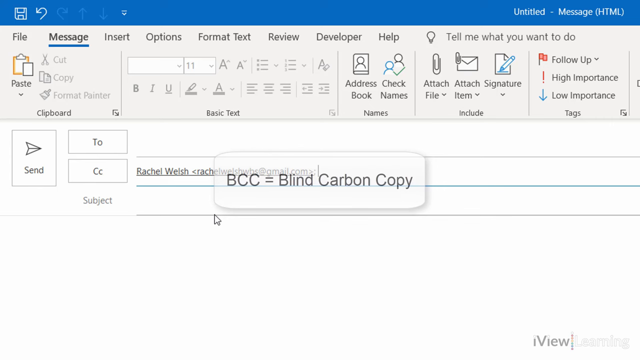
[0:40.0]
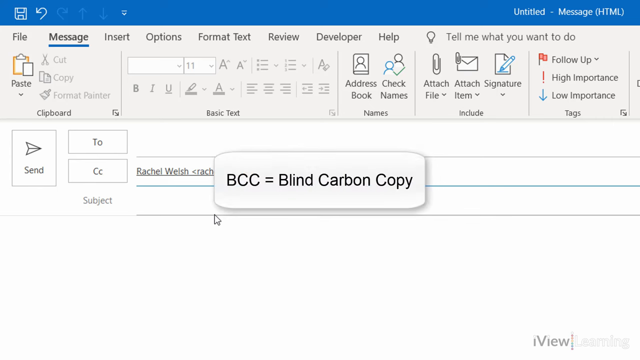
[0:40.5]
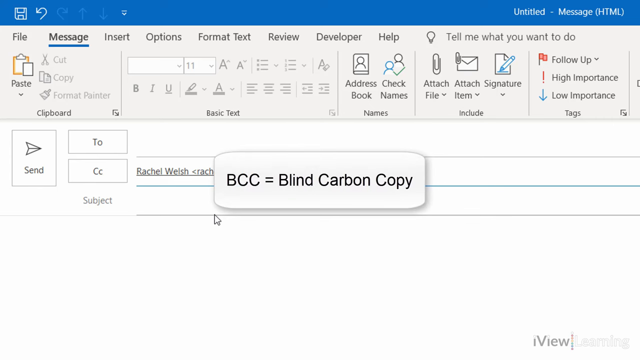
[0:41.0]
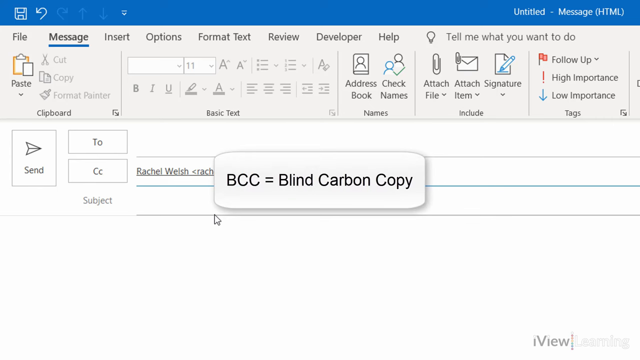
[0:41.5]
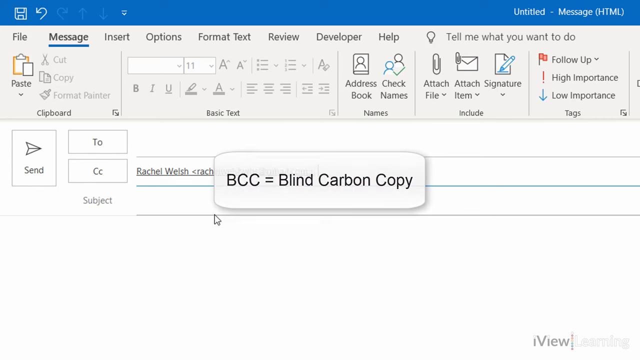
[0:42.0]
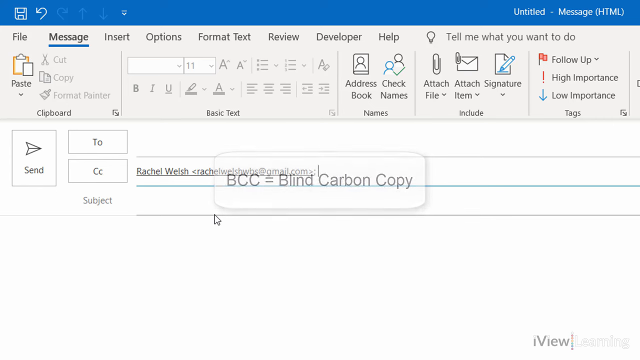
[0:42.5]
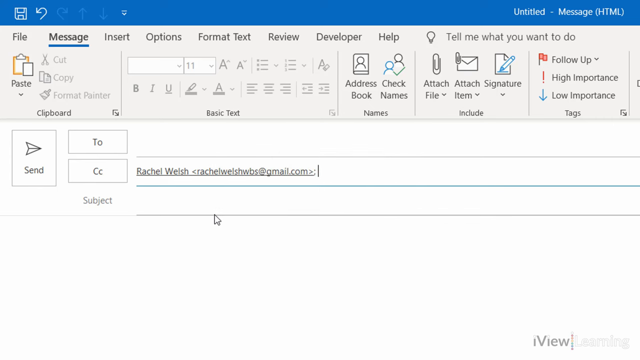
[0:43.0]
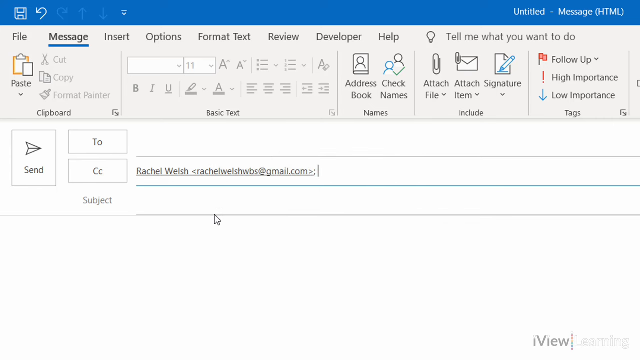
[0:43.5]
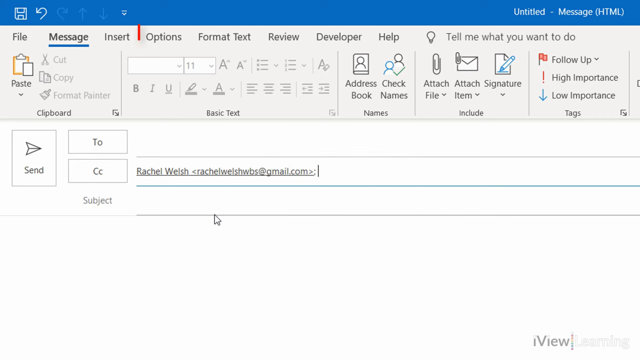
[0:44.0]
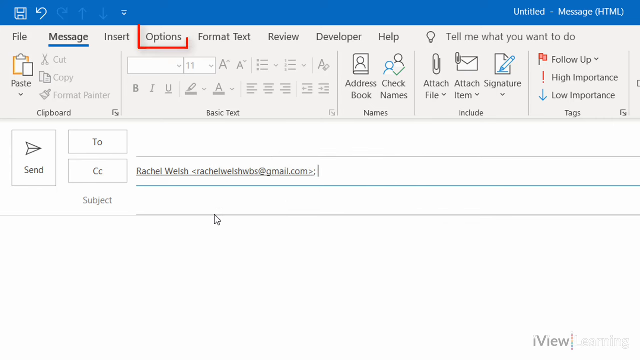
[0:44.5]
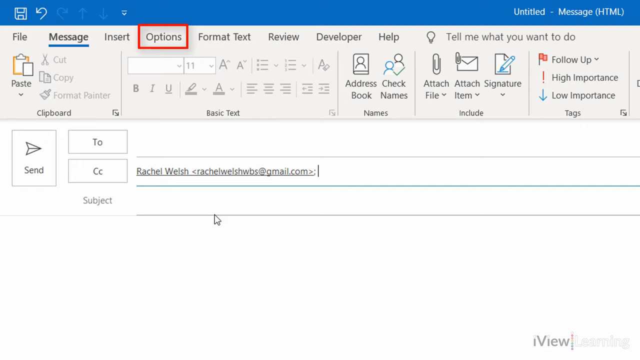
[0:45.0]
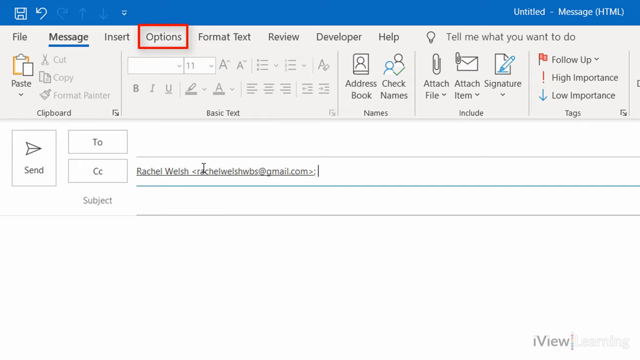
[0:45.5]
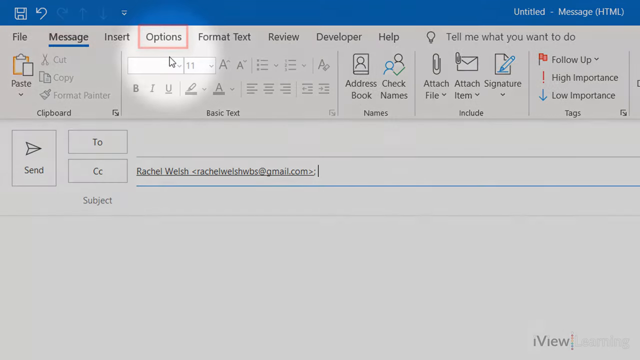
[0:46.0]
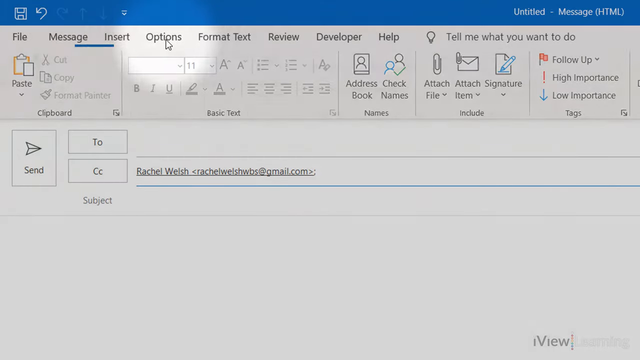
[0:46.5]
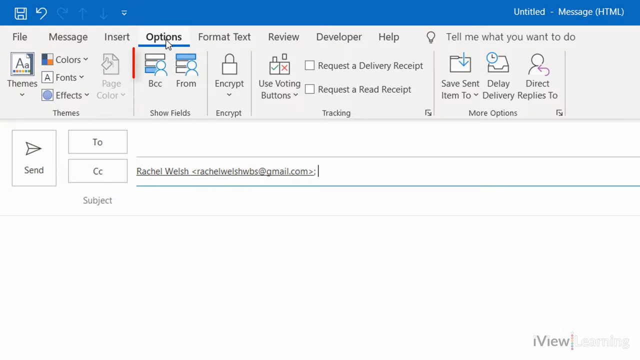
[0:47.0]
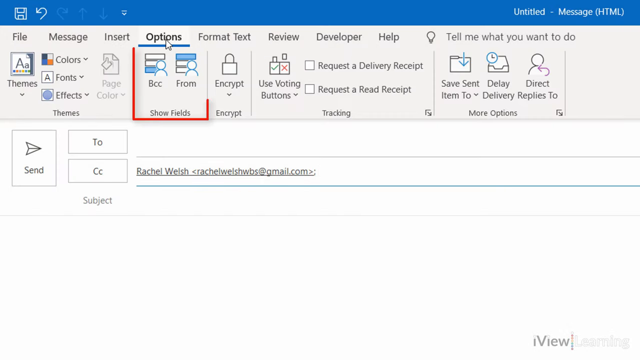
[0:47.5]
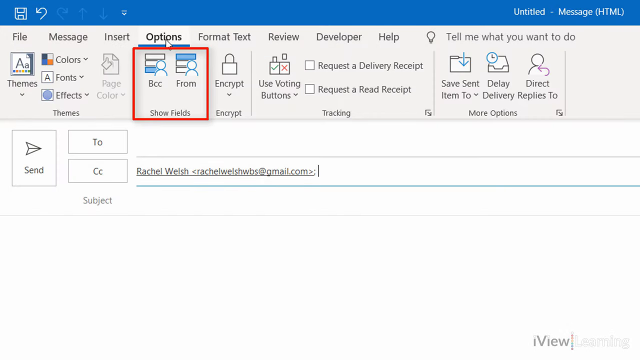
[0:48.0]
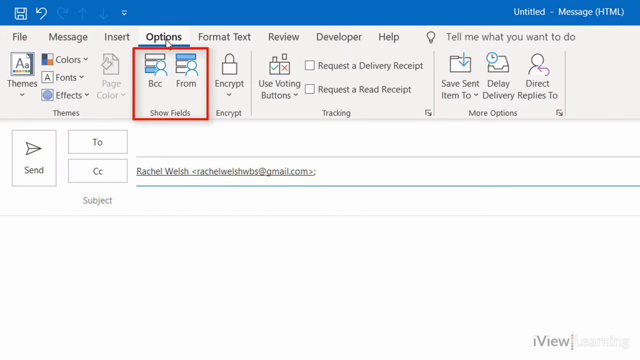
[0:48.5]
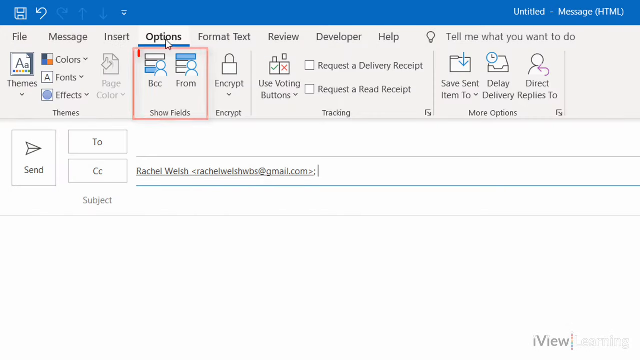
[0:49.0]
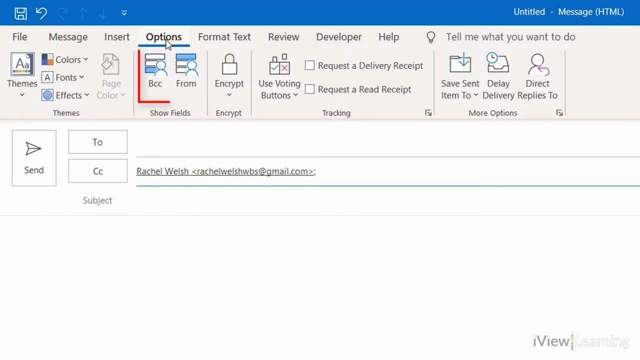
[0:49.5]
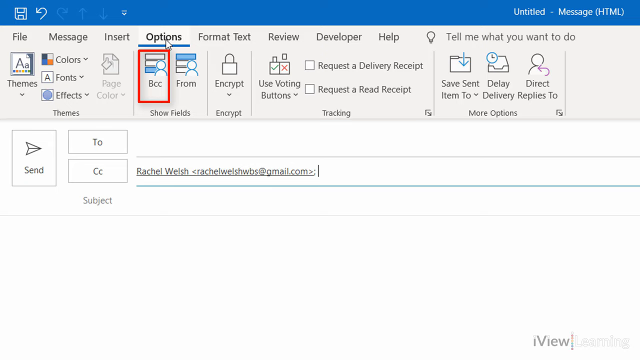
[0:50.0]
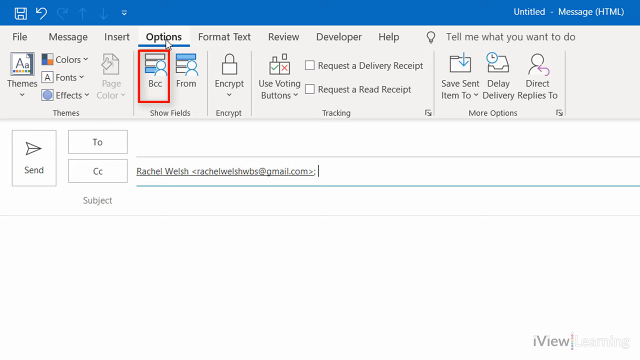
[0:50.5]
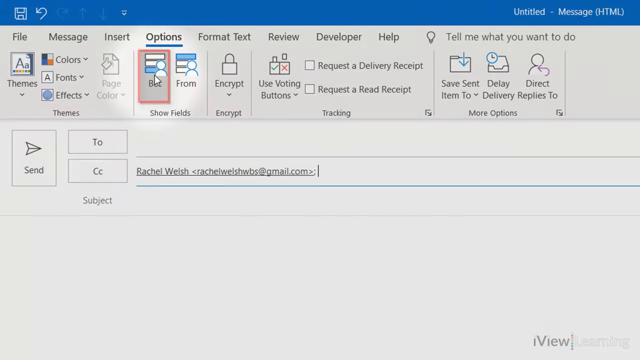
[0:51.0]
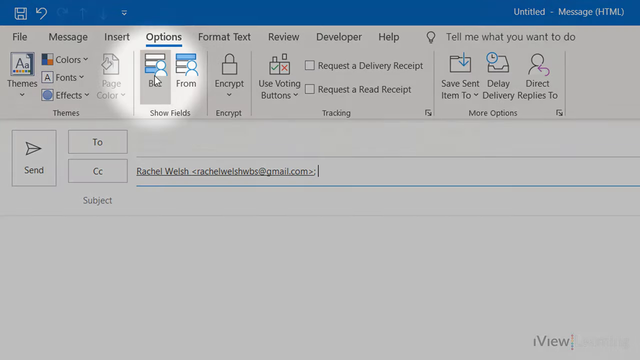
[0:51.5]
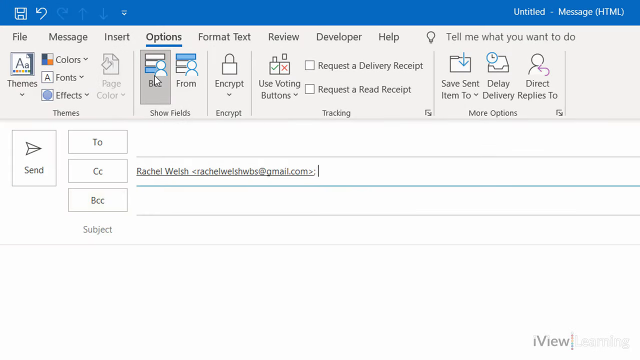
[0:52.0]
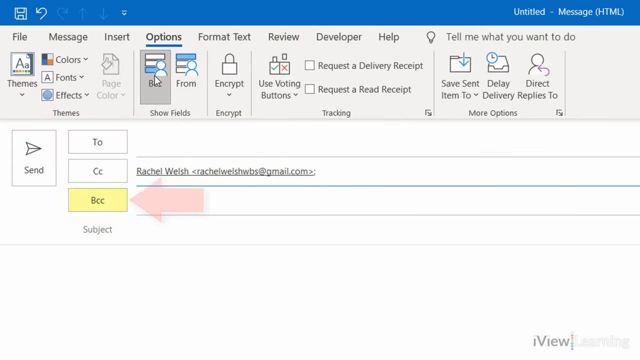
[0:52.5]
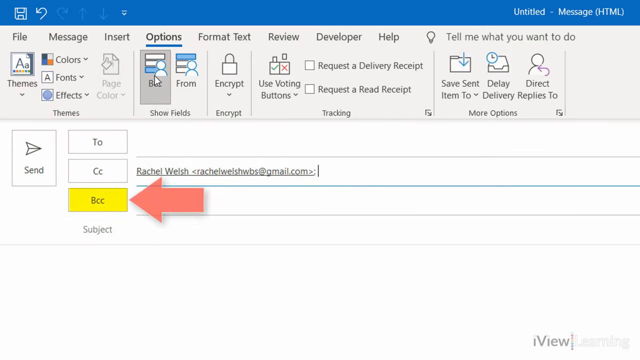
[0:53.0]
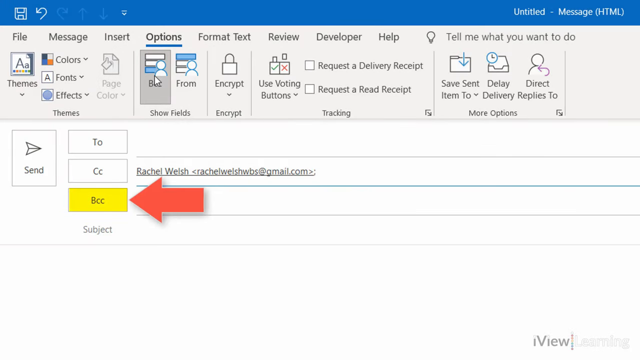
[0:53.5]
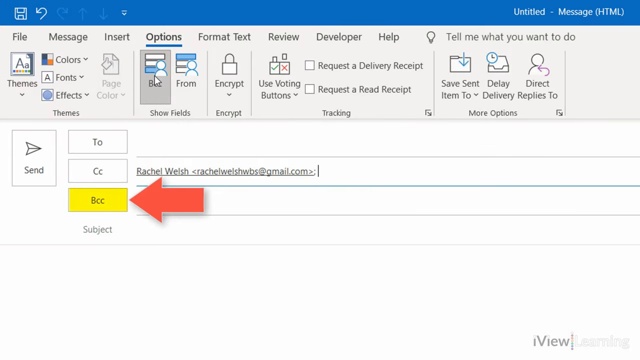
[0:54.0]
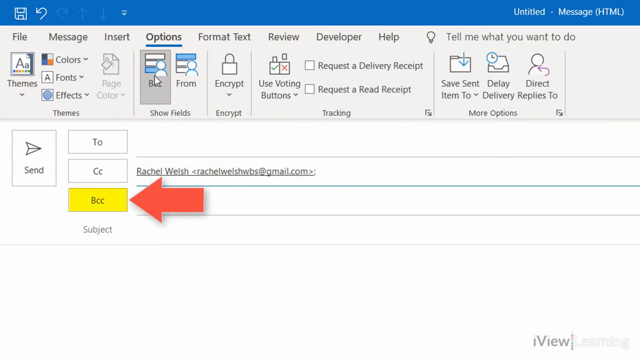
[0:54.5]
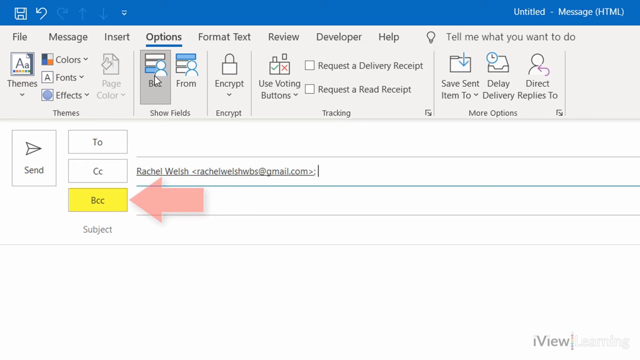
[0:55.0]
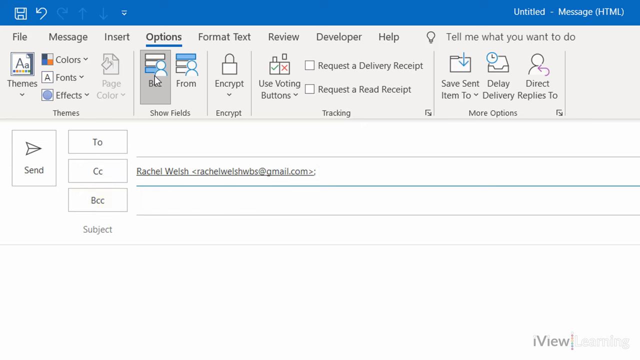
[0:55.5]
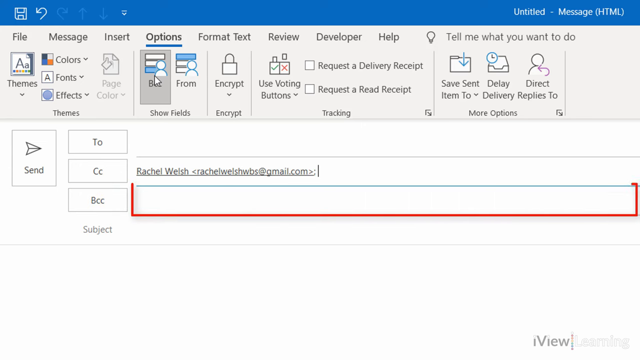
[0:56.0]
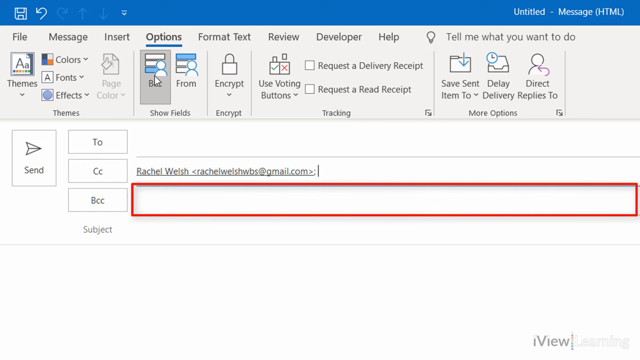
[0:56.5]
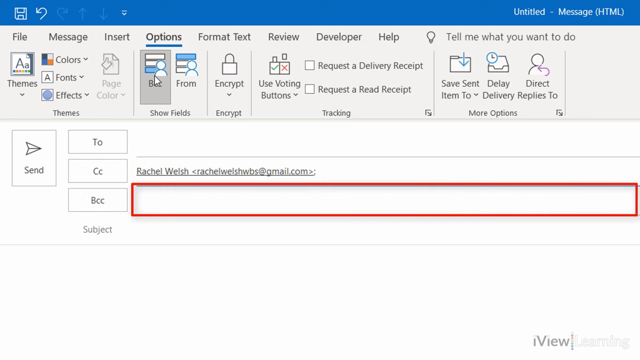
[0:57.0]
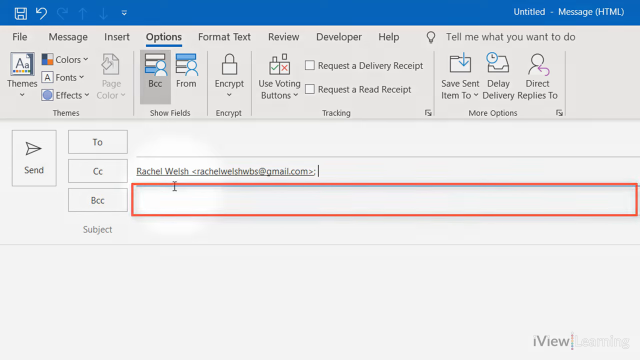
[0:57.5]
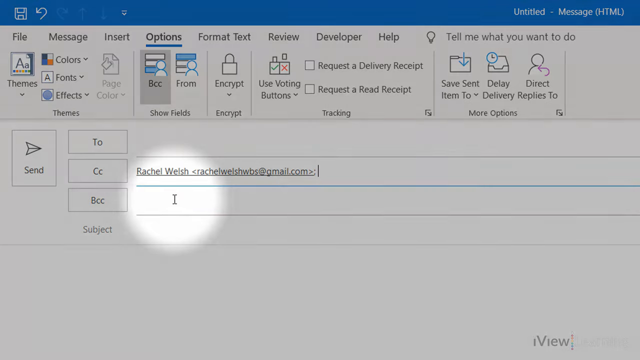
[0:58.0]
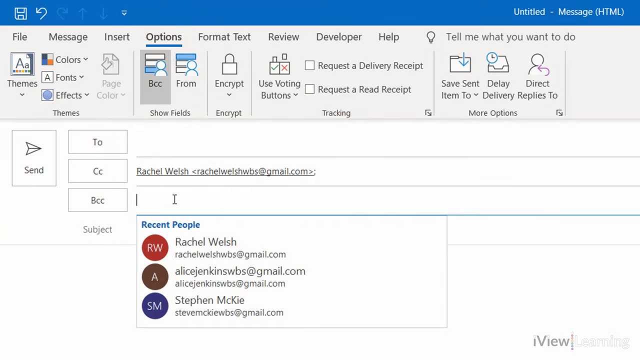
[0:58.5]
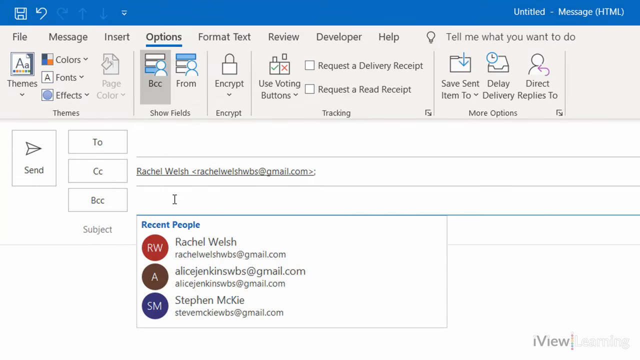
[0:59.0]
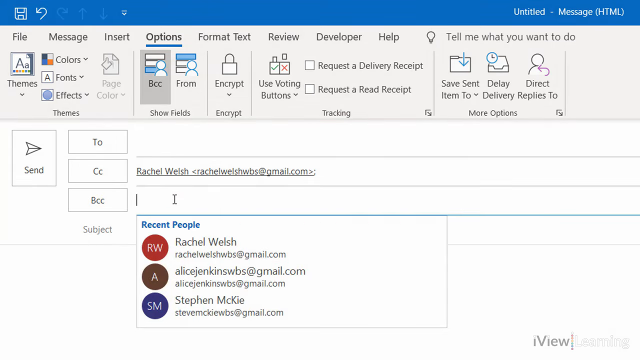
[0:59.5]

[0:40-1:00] The white rounded rectangular blind carbon copy overlay in the center of the screen fades away, and a red rectangle along the top border of the screen highlights a menu option titled "options". The red rectangle fades, and a circular cursor view dims the rest of the screen, keeping this portion highlighted. The mouse clicks the option, bringing up an options menu, where a show field portion of the submenu is highlighted by a red rectangle that starts from the top left corner and moves downwards in a counterclockwise motion. This show field section has a BCC button, which is highlighted with the red rectangle. The mouse hovers over the button, and the rest of the screen dims to single it out. The button is clicked, and a BCC field opens in the main email body, showing a new line and a new button. A red rectangle and a red rectangular arrow pointing to the left indicate this button, which is highlighted in yellow, and then the mouse moves downwards to the text field, which is highlighted with the same rectangular animation.